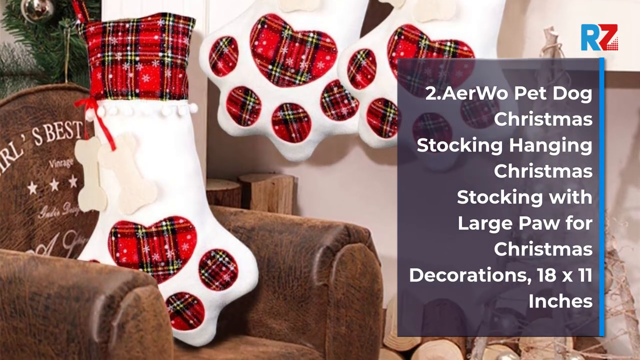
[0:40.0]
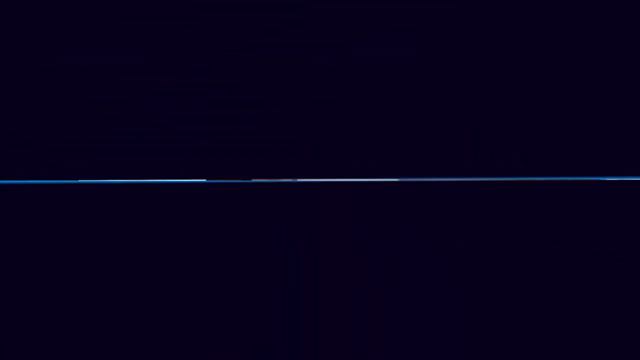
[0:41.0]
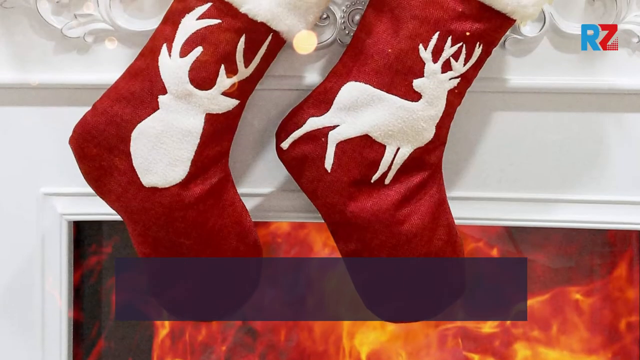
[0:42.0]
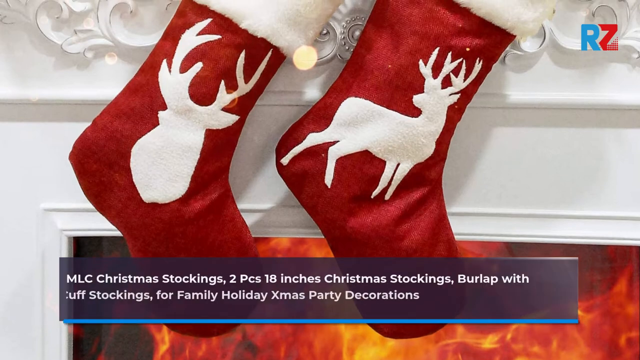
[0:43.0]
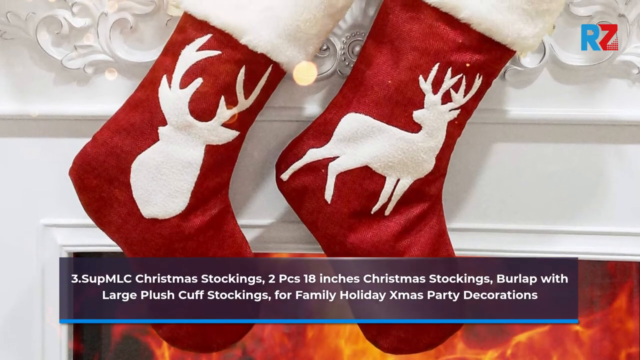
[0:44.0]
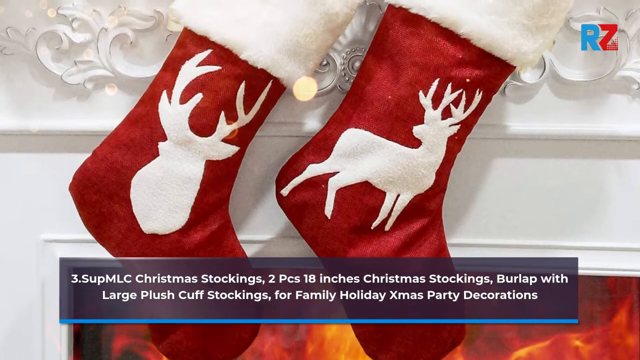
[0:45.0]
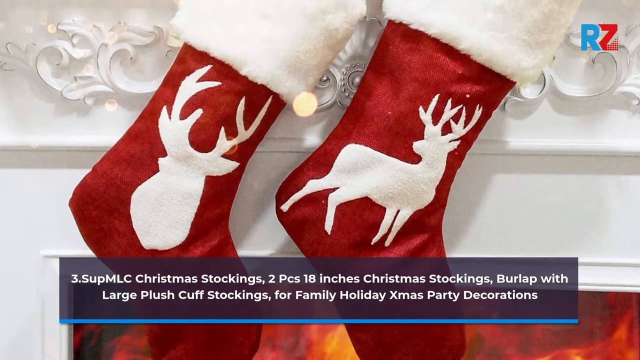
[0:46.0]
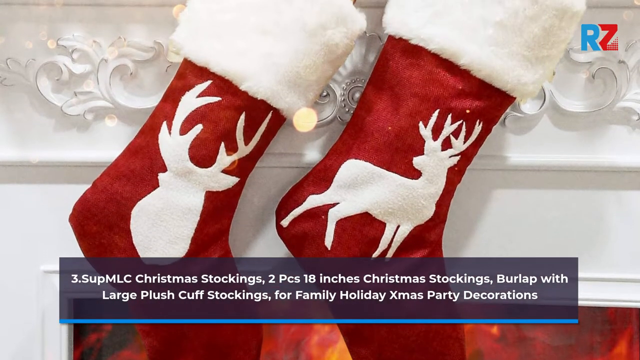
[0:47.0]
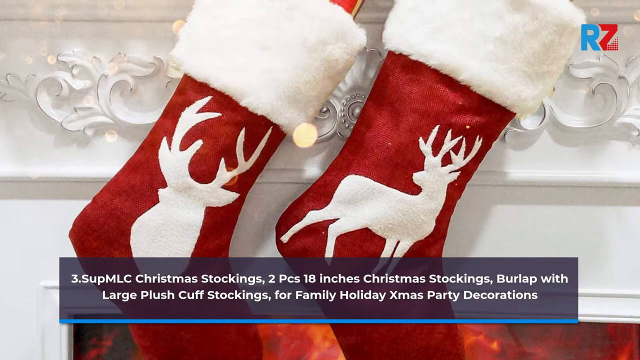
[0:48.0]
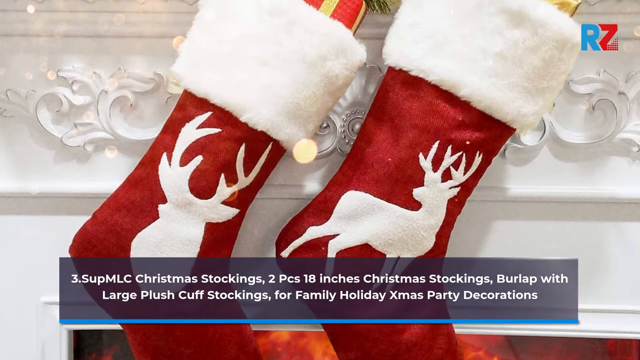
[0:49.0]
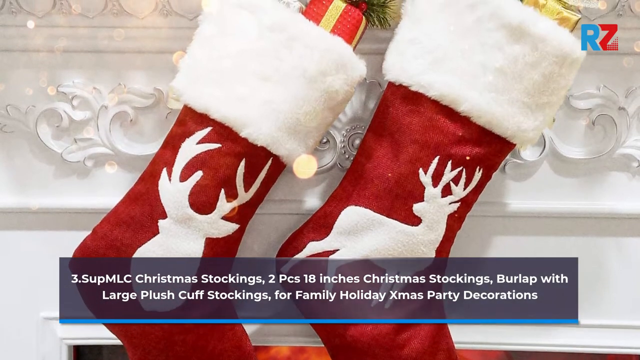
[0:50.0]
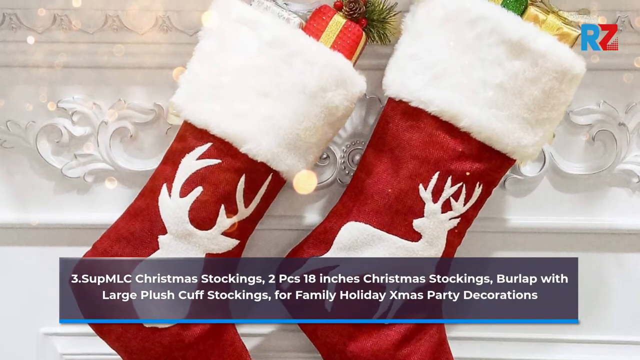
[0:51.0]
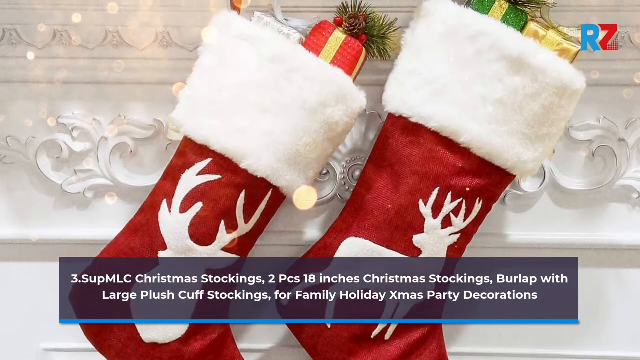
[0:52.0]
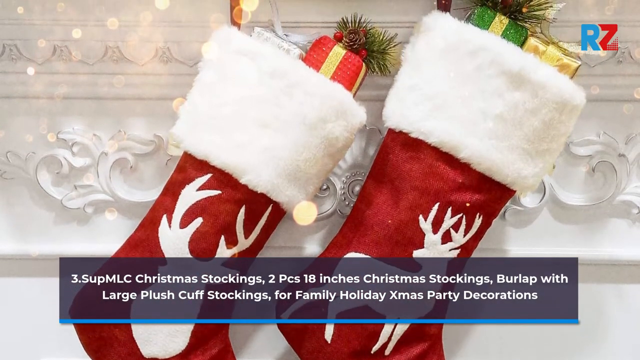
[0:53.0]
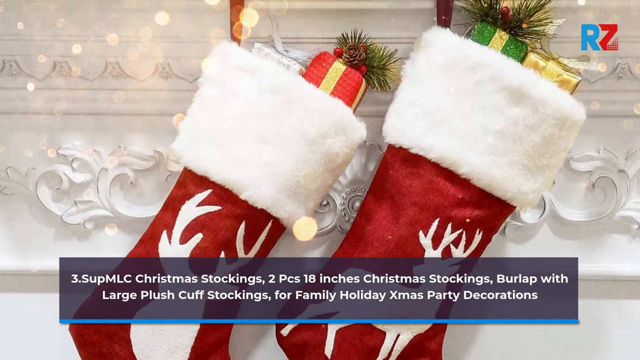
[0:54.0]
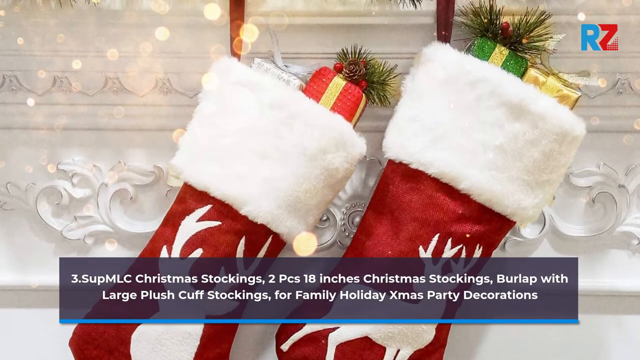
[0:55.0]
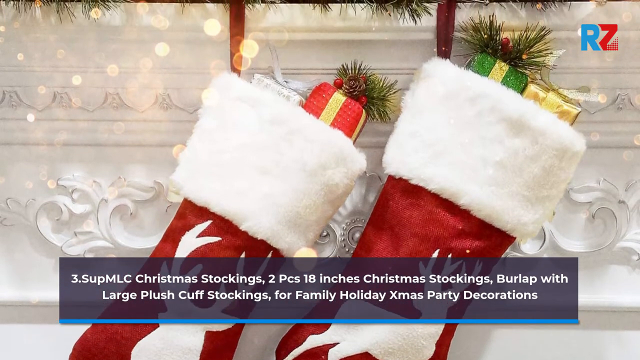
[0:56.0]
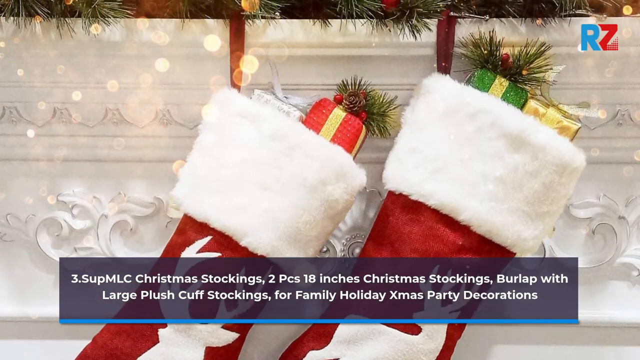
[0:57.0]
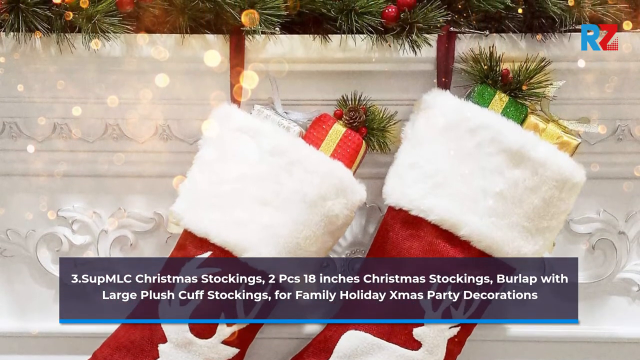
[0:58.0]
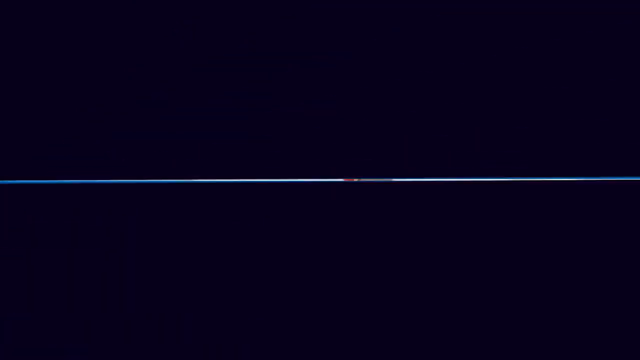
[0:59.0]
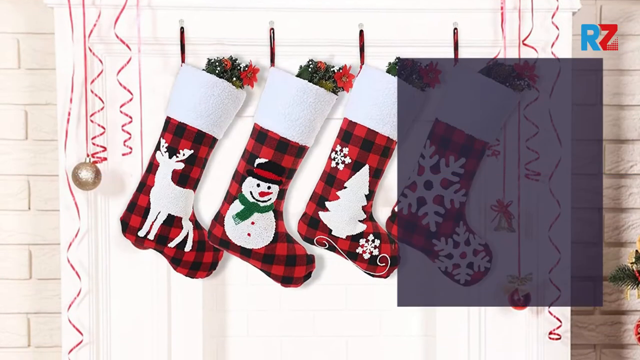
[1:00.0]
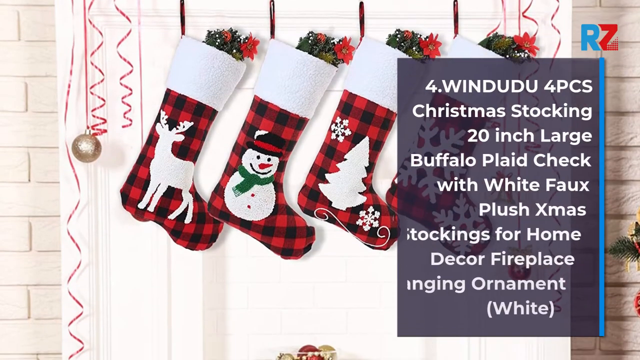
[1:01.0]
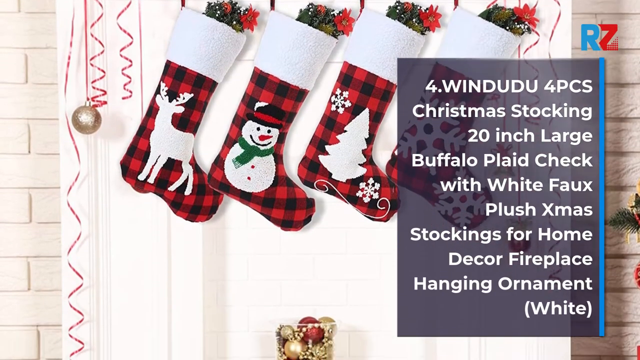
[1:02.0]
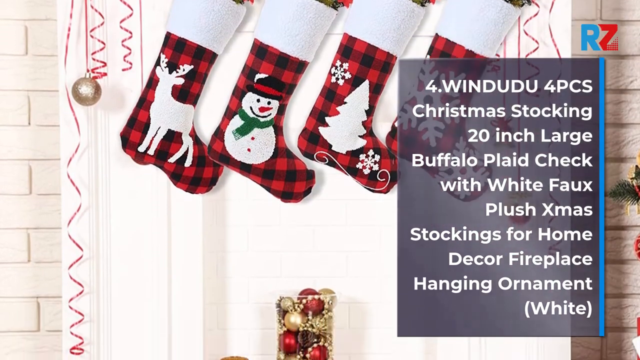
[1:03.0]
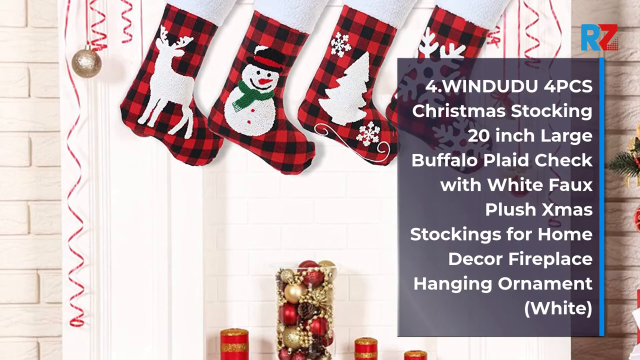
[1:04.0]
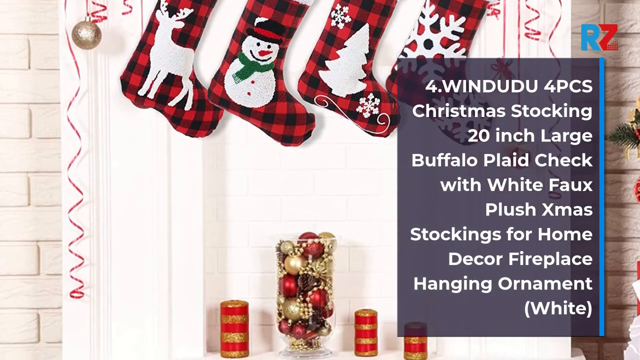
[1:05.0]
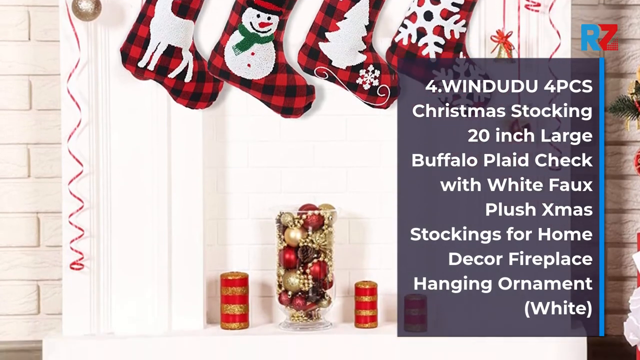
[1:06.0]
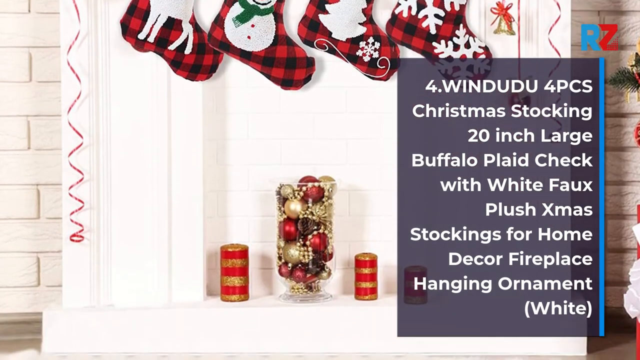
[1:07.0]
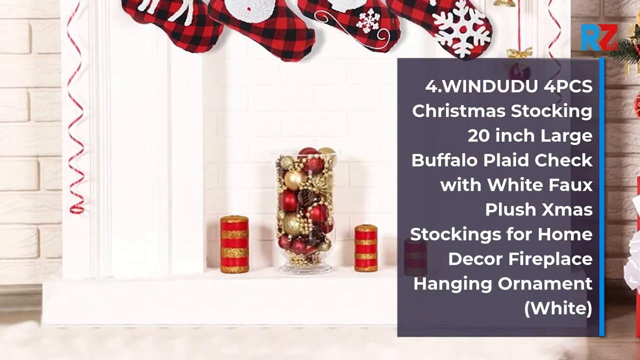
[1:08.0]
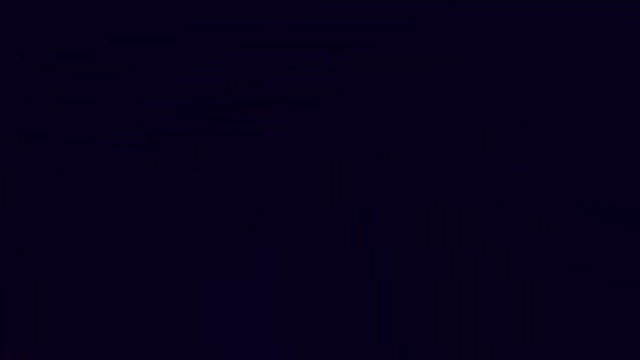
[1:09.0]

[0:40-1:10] Number 3 is SUP MLC Christmas Stockings, 2 piece, 18 inches, burlap Christmas stockings with large plush cuffs for family holiday Xmas party decorations. These are the two stockings seen in the very first second of the video. They look like they are made of burlap but also look like denim, and they are scarlet, dark red. Each stocking has one single deer with long horns; the one on the left looks like the Milwaukee Bucks NBA logo because it is just the head of a buck or deer. The tops of the stockings have a fuzzy exterior. They are hung over a wreath or a wall with white designs, and there are little fake tin presents inside them.